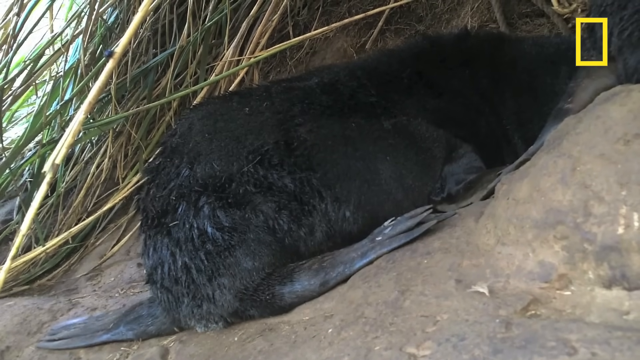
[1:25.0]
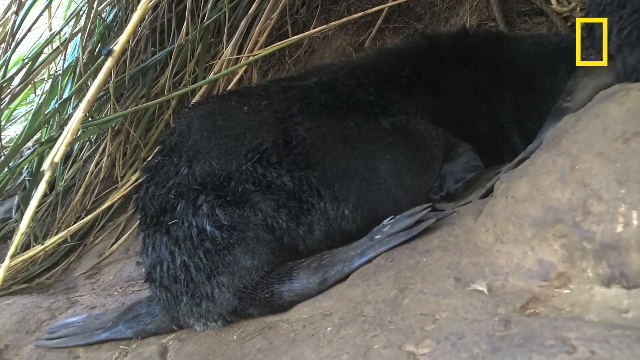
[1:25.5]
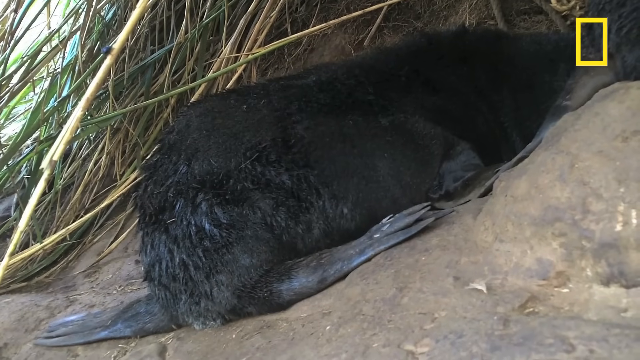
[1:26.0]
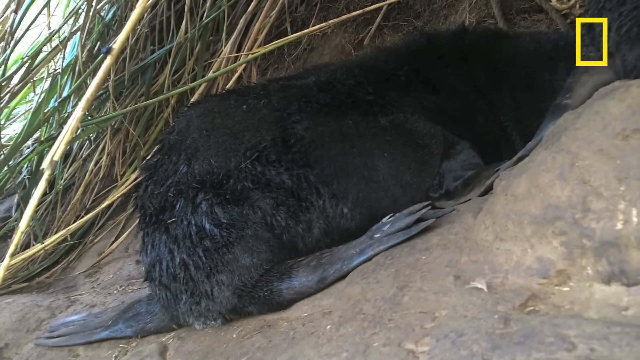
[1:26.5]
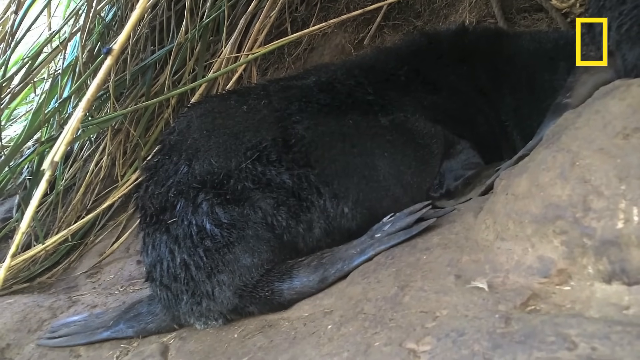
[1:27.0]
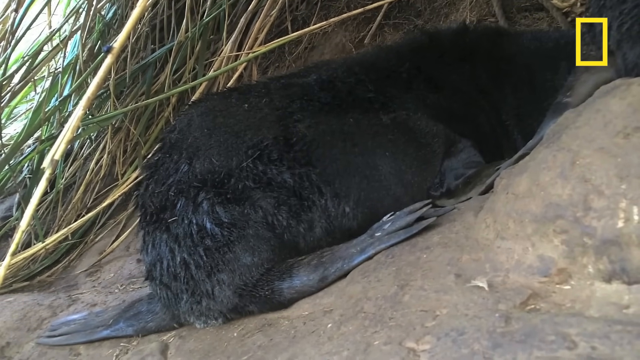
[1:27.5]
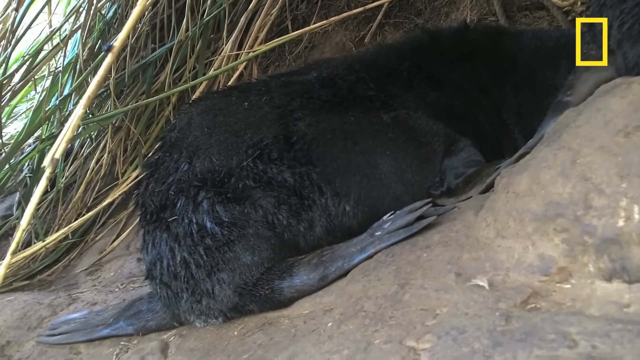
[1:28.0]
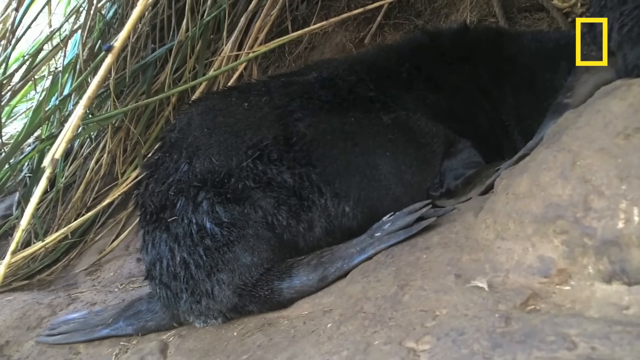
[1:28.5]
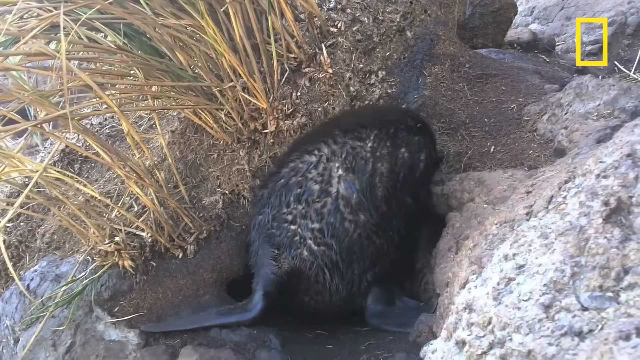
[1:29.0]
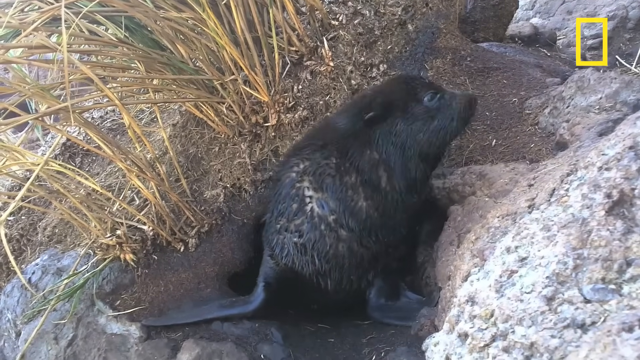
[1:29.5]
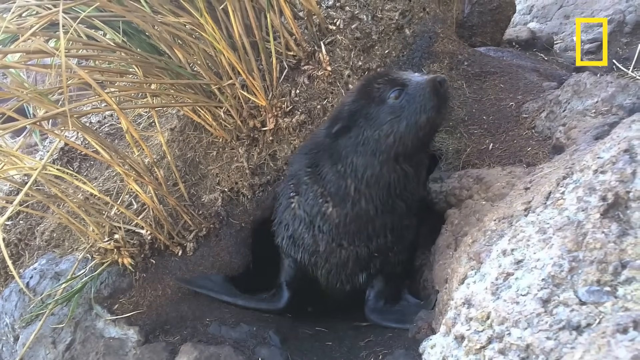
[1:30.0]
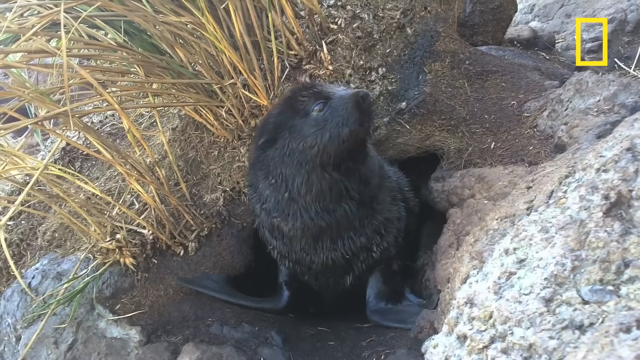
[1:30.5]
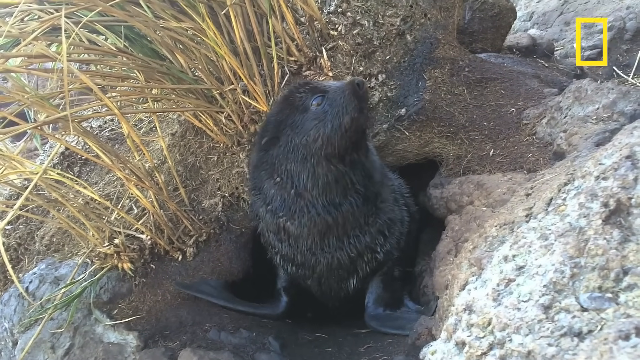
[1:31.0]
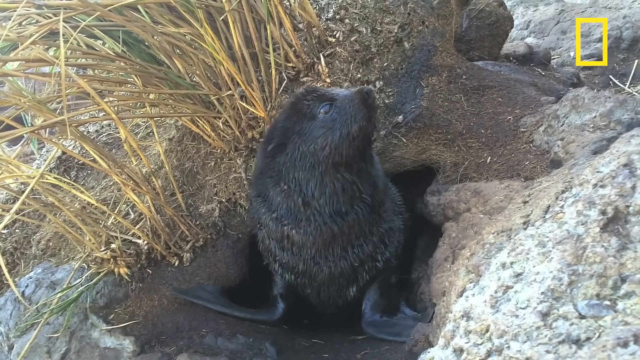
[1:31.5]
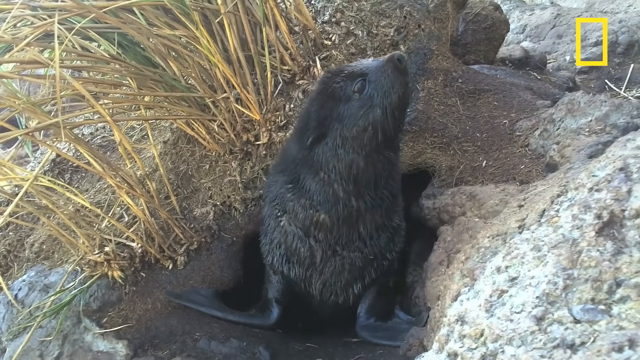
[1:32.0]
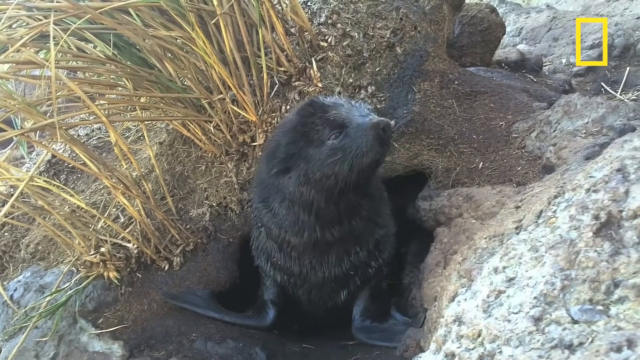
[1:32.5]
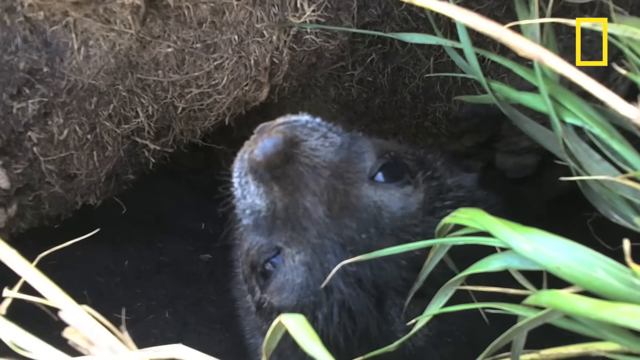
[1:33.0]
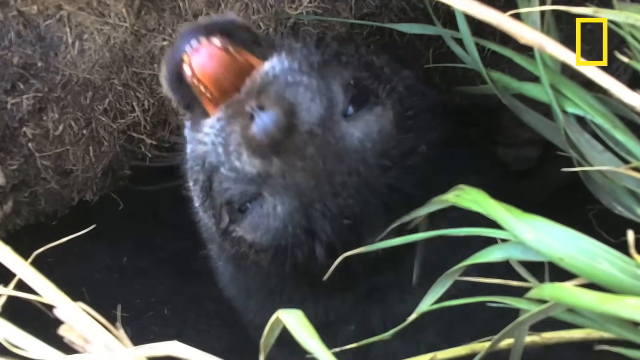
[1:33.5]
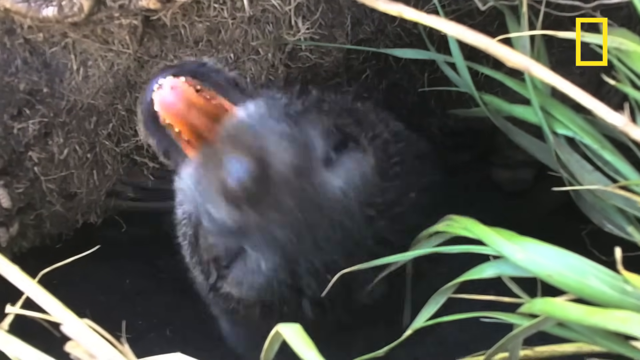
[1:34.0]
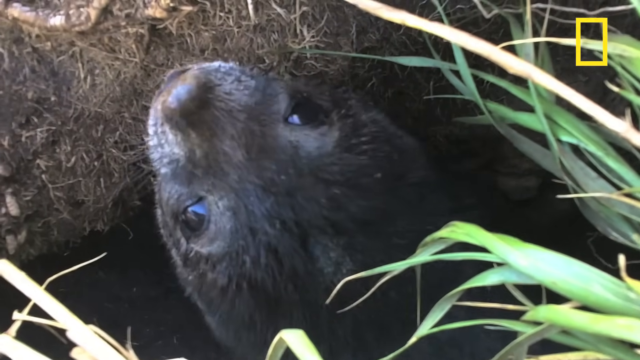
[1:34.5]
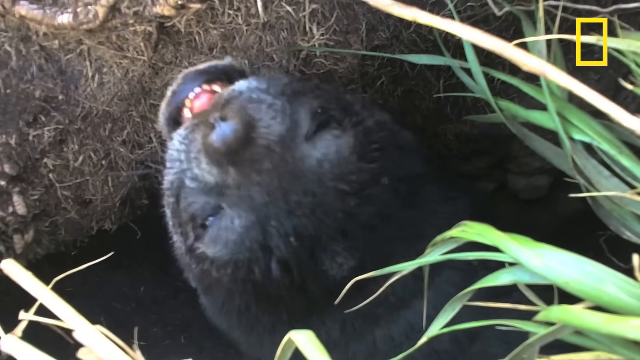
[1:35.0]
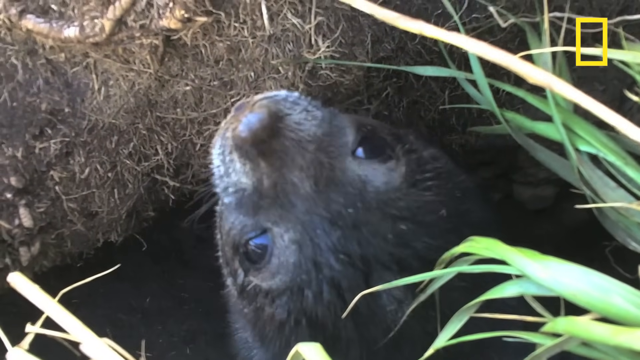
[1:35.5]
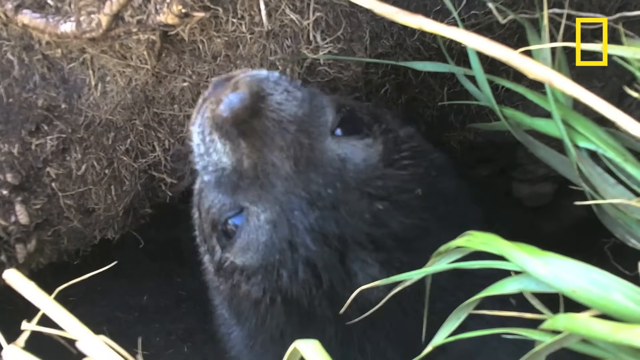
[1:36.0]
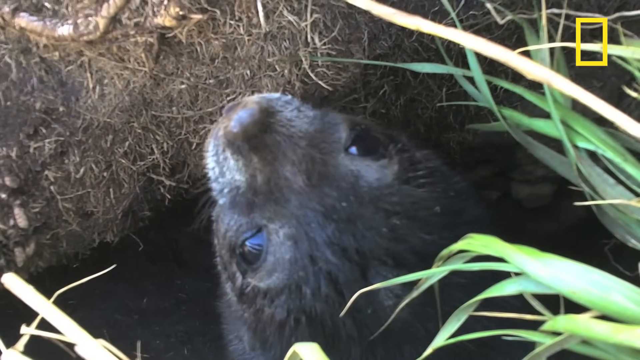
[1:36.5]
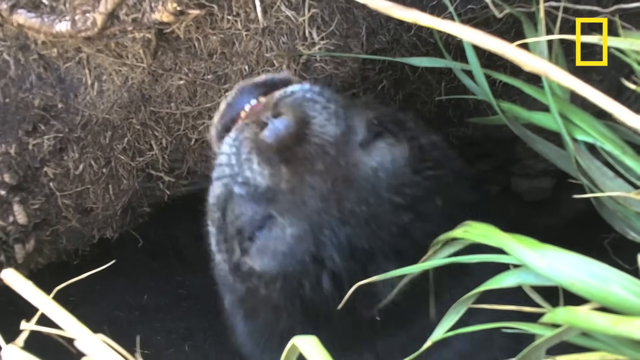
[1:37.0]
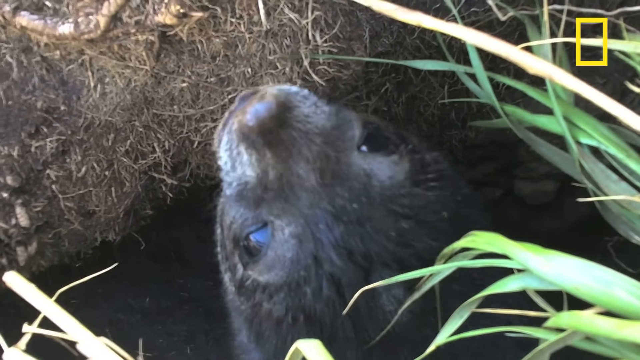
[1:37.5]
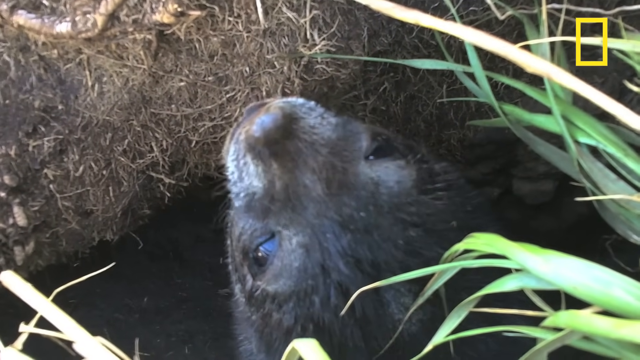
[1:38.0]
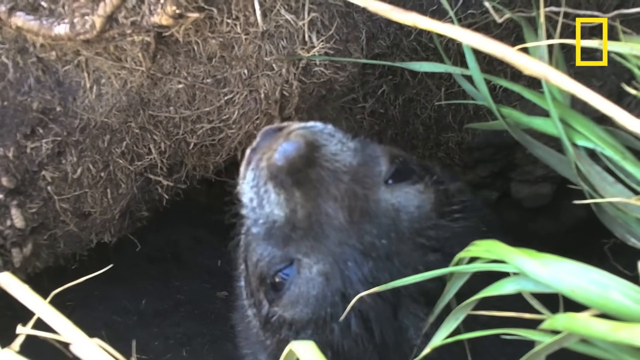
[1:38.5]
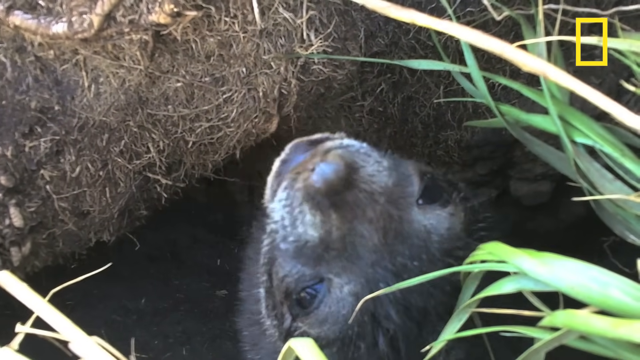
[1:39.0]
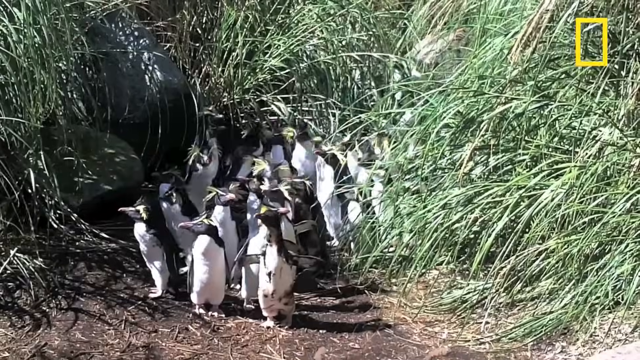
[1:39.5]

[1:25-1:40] In a corner, what looks like an otter is in a little hole, apparently some kind of cave. A whole bunch of black-and-white penguins, probably about 20, are all in a group together, having just come out from an area covered with grass. The seal or otter kind of peeks its head out as it comes out of its little hole or cave.